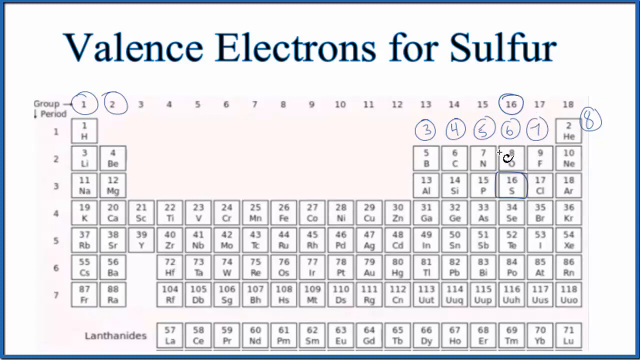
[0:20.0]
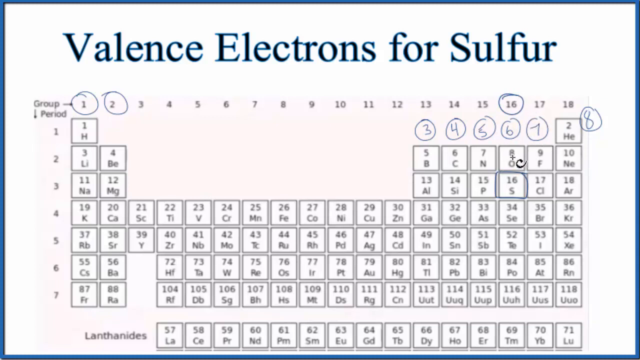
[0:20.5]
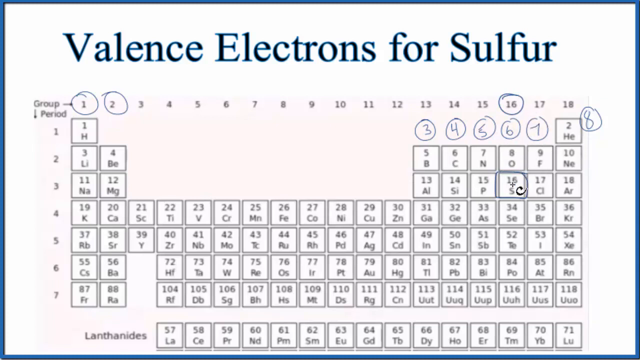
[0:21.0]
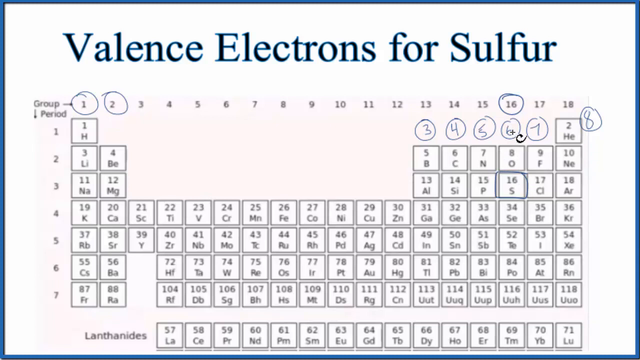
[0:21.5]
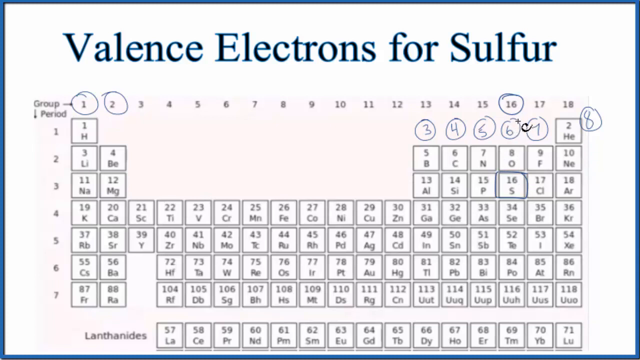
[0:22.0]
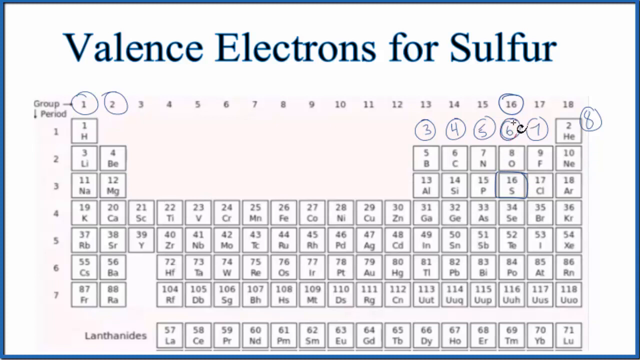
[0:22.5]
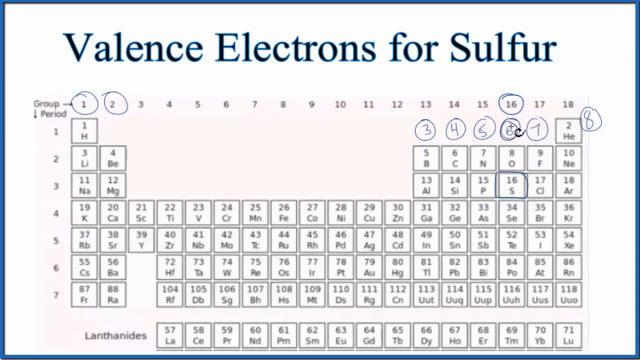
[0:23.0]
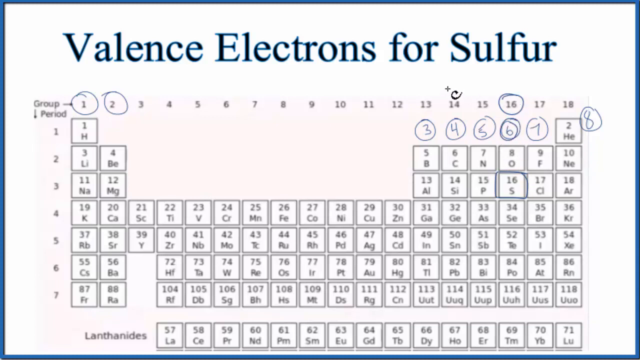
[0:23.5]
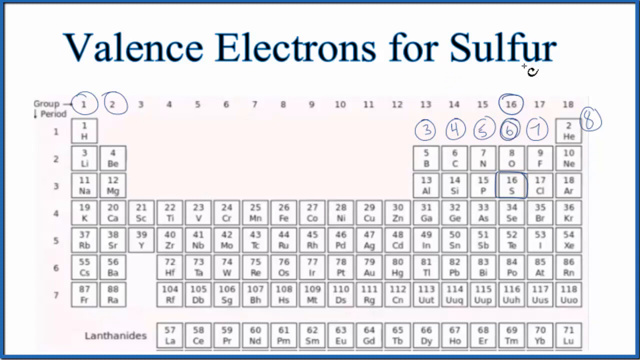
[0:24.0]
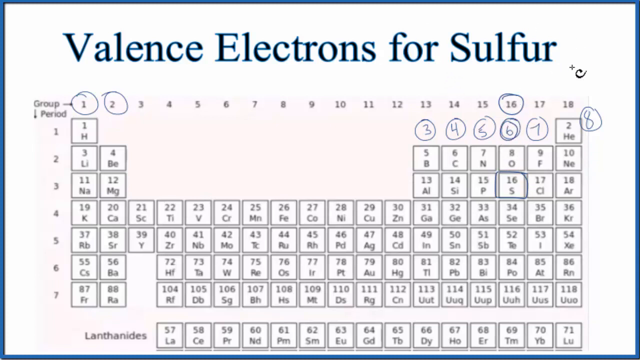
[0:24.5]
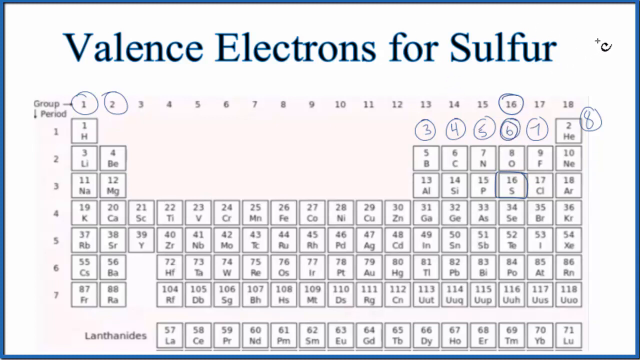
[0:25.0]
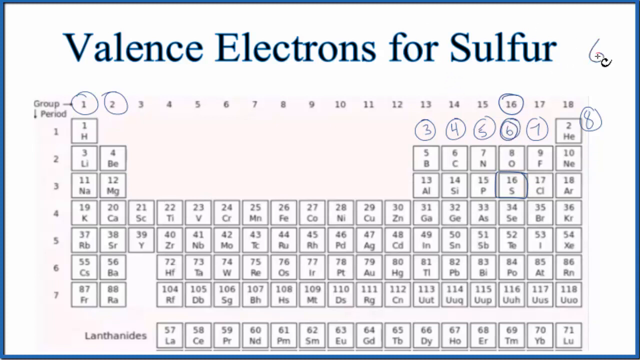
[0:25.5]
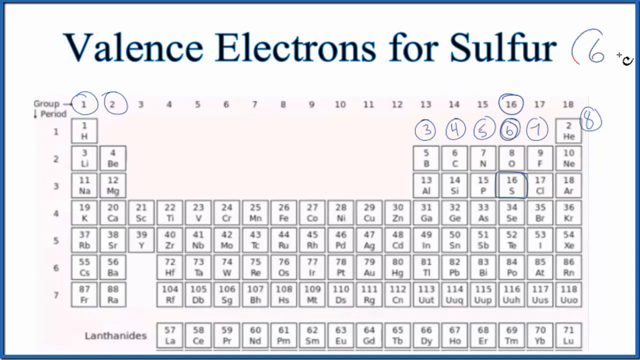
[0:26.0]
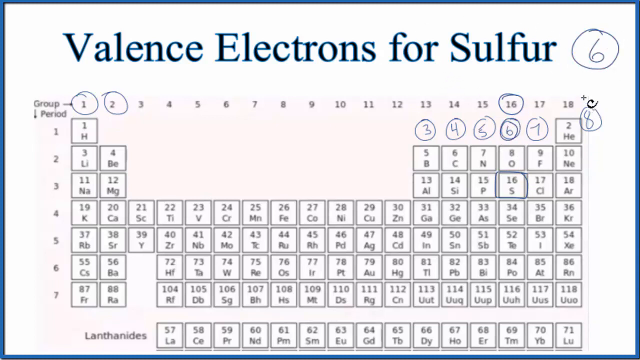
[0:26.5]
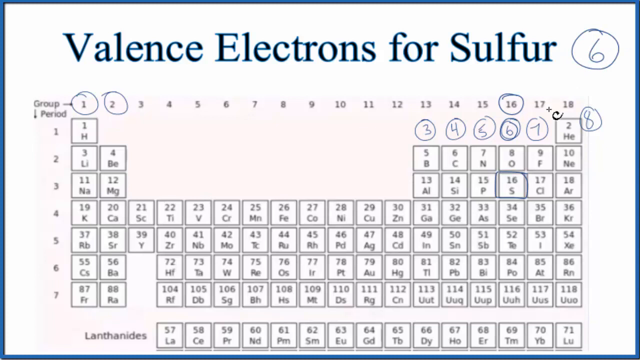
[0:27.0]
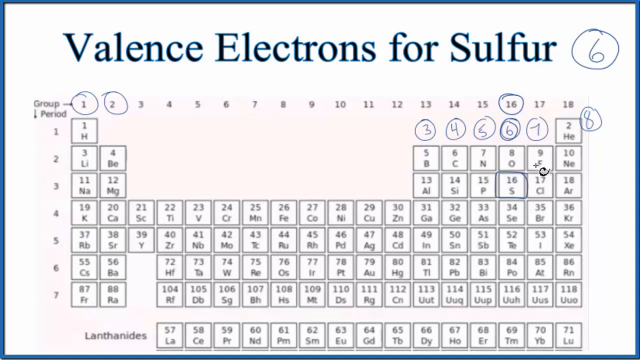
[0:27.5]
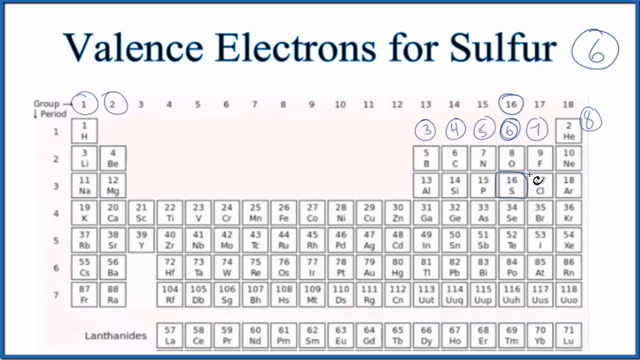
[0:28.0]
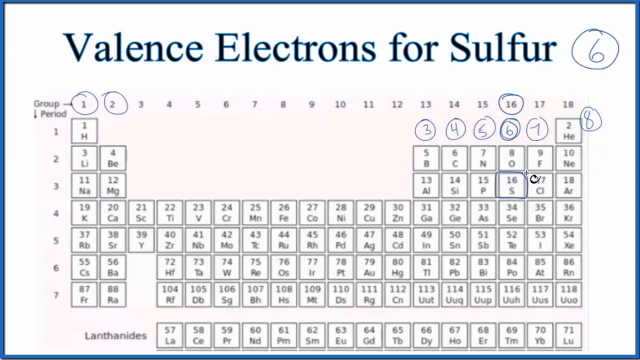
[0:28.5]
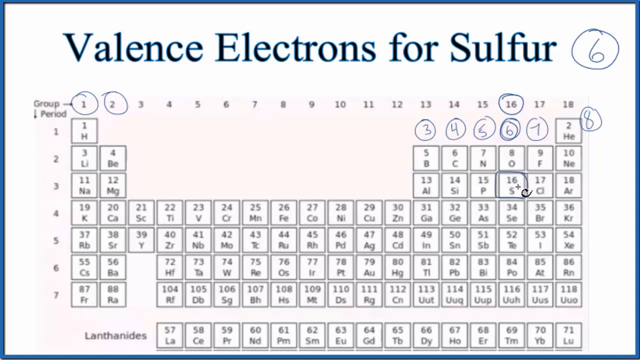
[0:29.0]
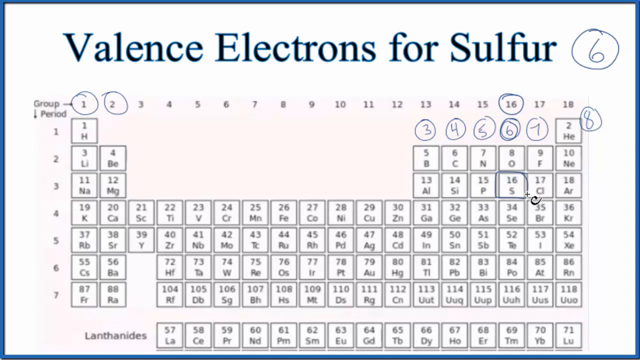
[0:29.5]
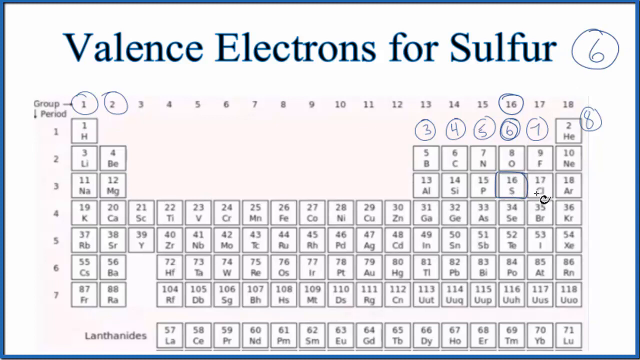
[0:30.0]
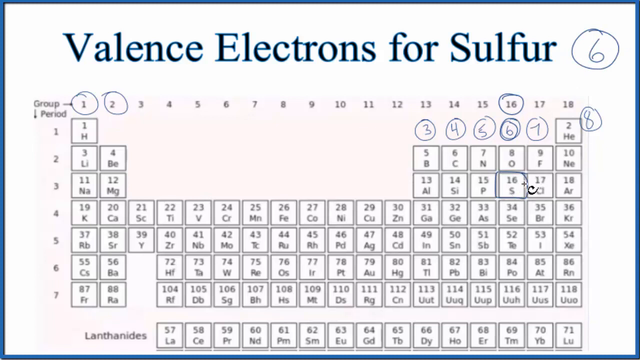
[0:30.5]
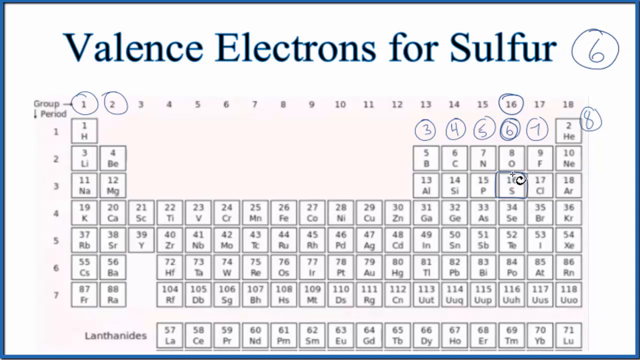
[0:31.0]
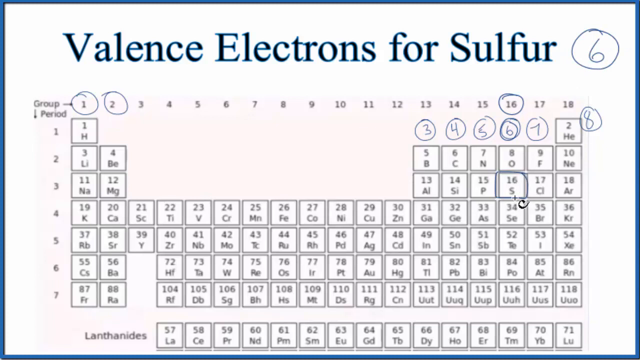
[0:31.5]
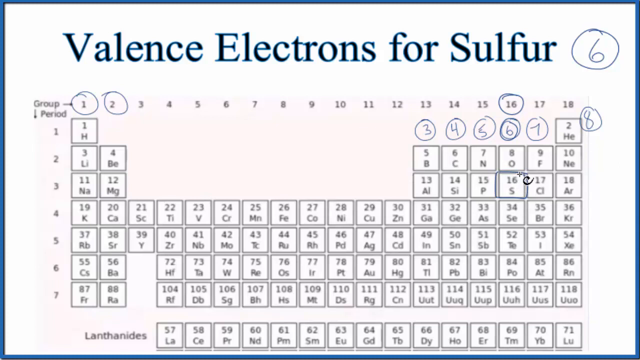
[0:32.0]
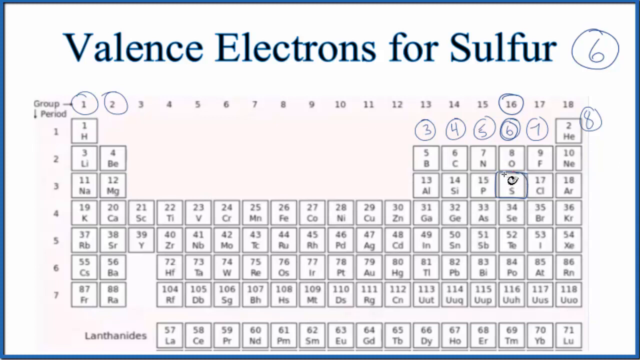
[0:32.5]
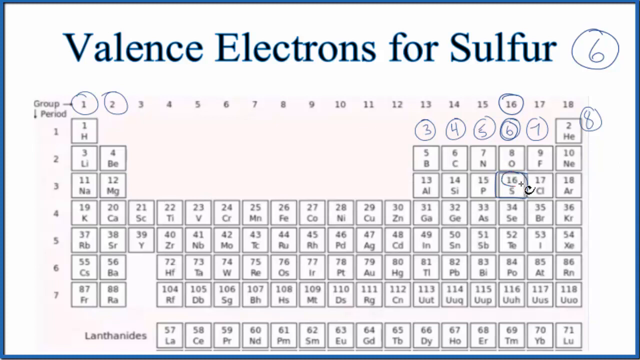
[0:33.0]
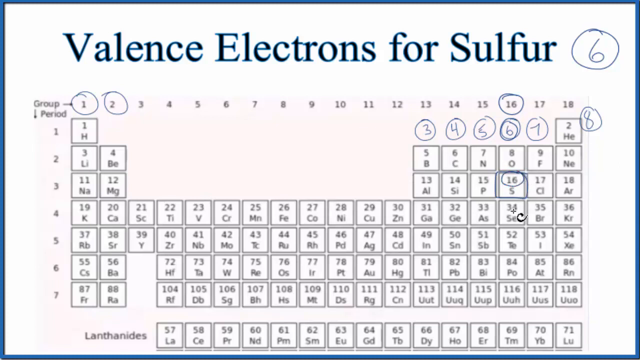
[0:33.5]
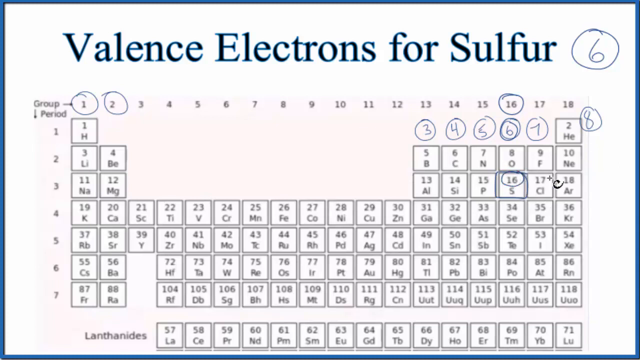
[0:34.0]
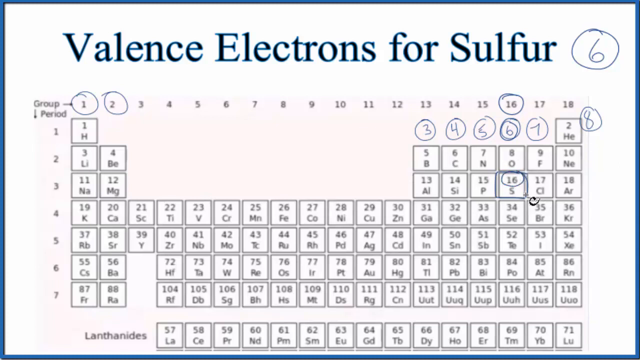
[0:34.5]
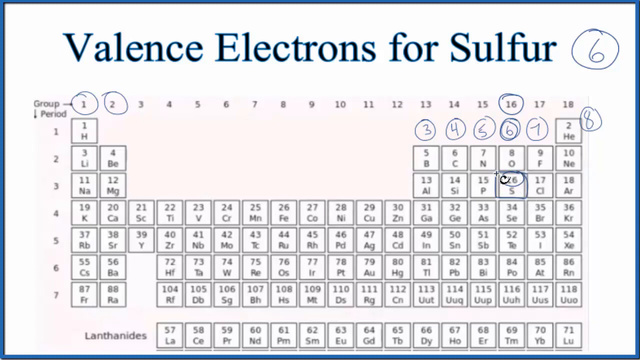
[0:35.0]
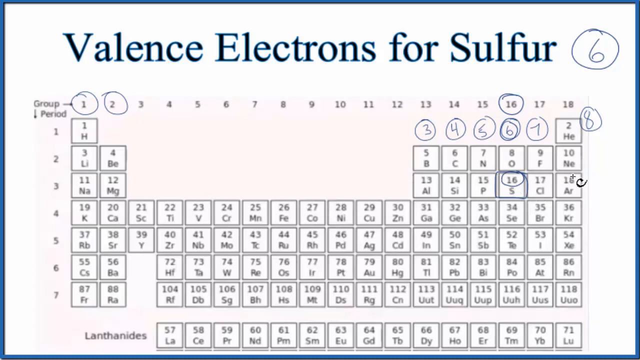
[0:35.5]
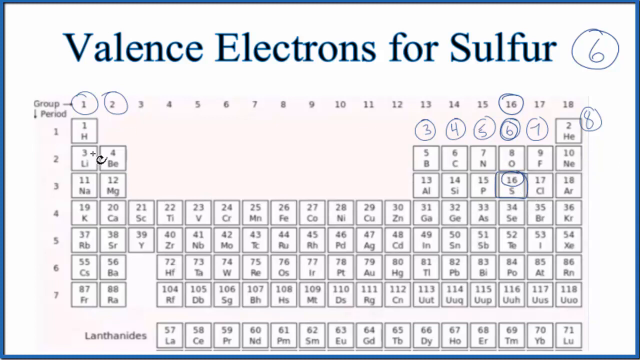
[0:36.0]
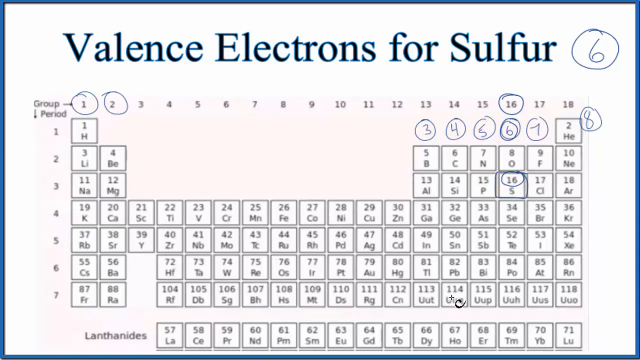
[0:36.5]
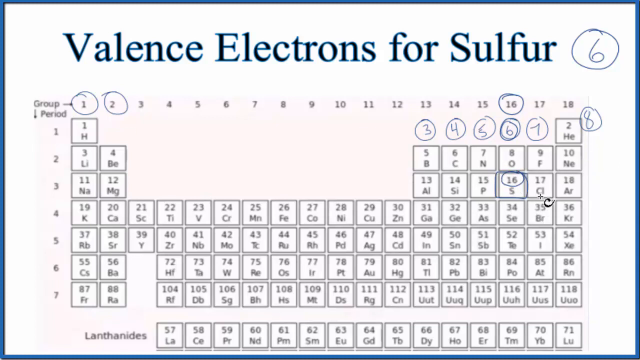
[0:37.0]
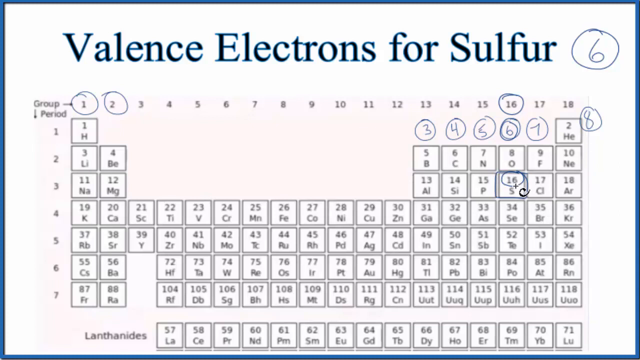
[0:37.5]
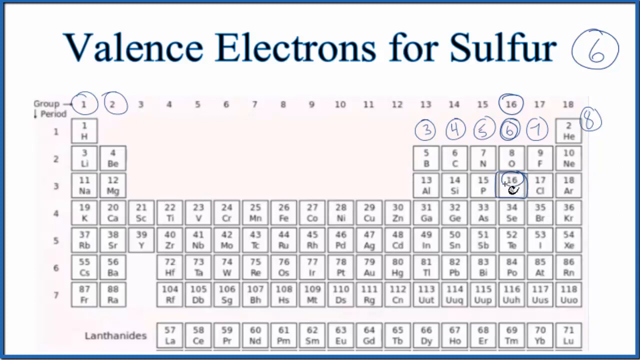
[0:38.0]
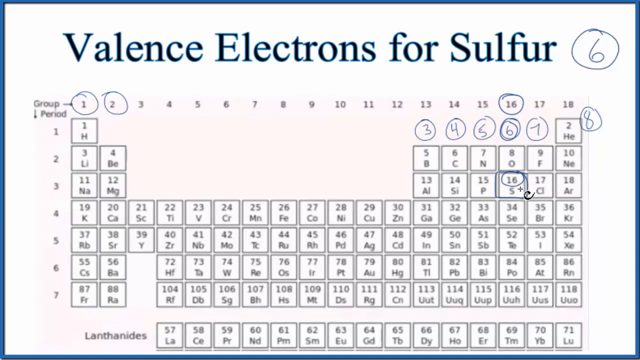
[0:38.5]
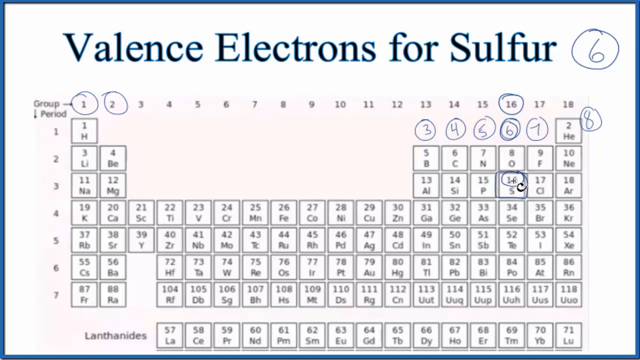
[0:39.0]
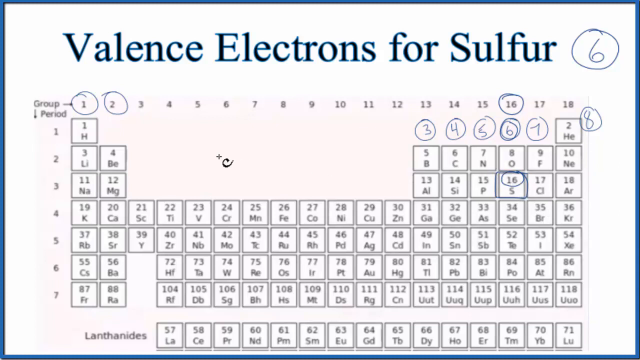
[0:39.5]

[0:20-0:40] The page titled "valence electrons for sulfur" is shown, and the pointer moves down and circles the word "sulfur". The number six is written and then circled. The pointer keeps pointing at the number 16 and at the number 17, which has "CL", and a circle is drawn around the 16 area on the chart. The chart is a chemistry chart of all the elements. The numbers one and two are already circled, and on the far side a three, four, five, six, seven and eight have been drawn and circled as well. The number 16 at the top is circled. Across the top the chart is numbered horizontally from one to 18, and down the side from one to seven; a last section says "lanthanides", and there is another row at the bottom that could be row eight. The number 16 keeps being circled, and the number six is drawn at the top.